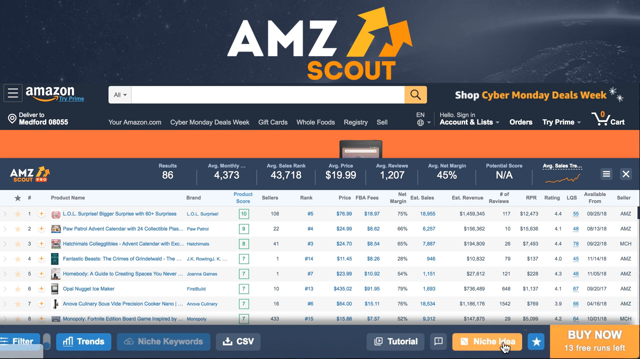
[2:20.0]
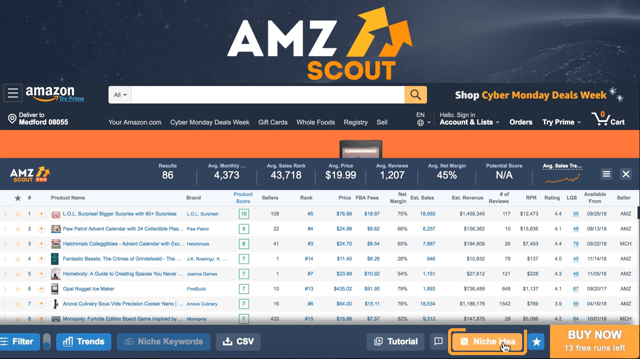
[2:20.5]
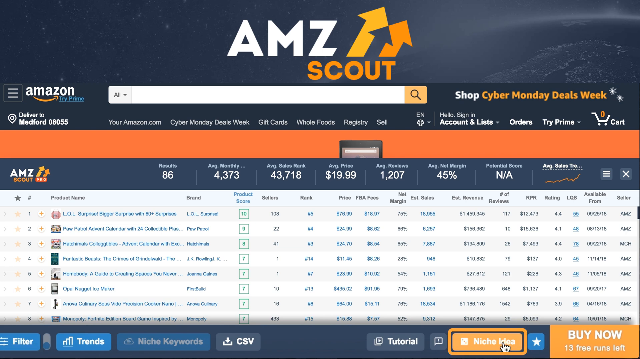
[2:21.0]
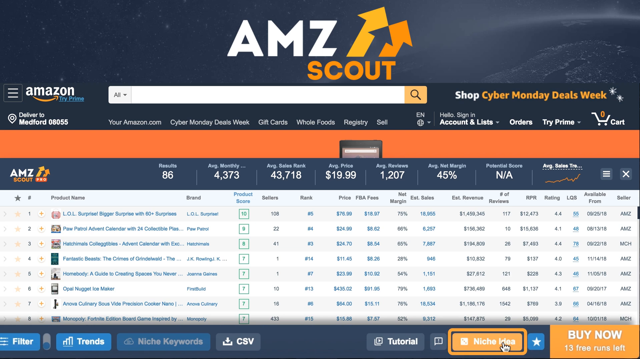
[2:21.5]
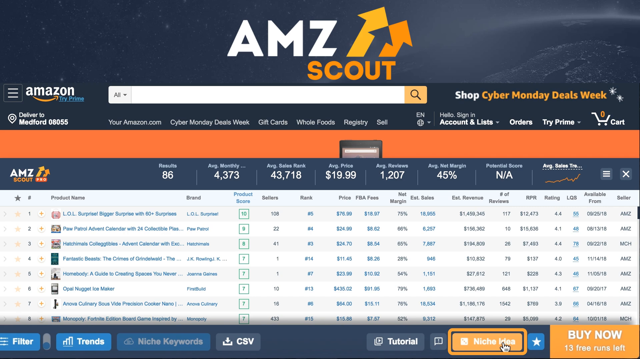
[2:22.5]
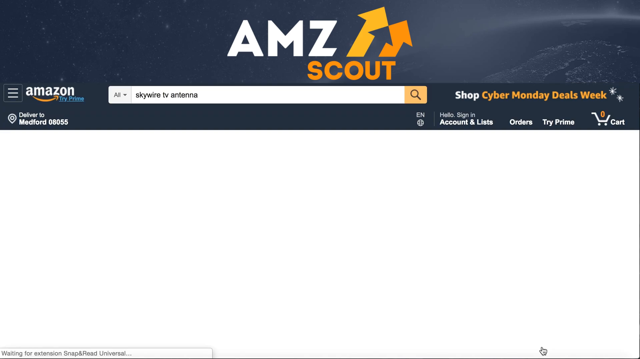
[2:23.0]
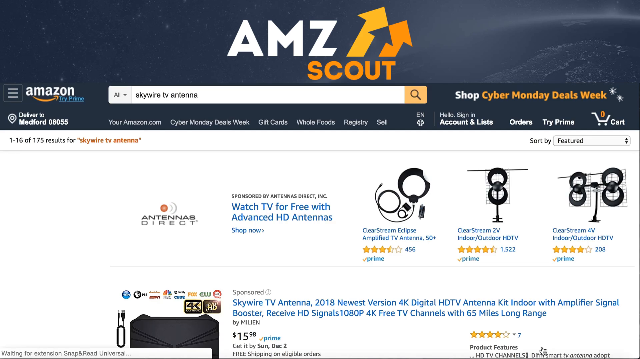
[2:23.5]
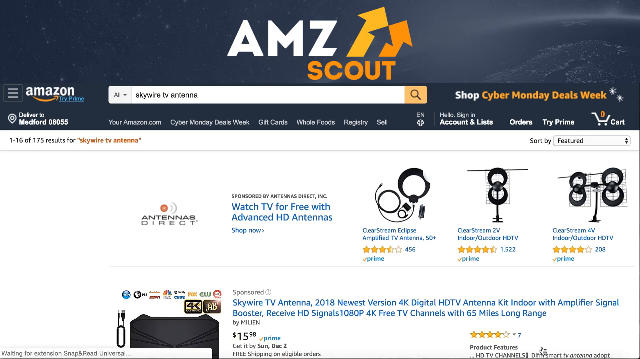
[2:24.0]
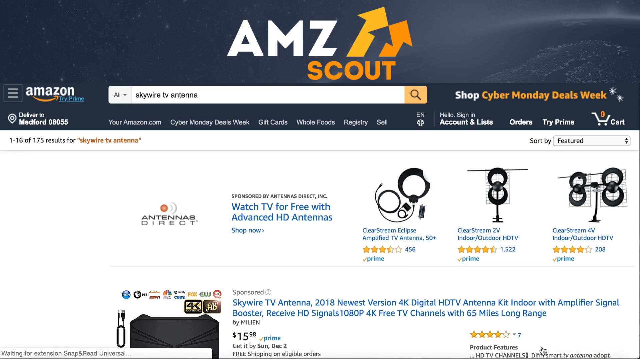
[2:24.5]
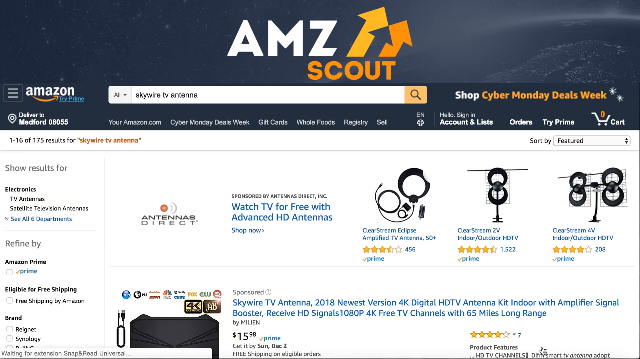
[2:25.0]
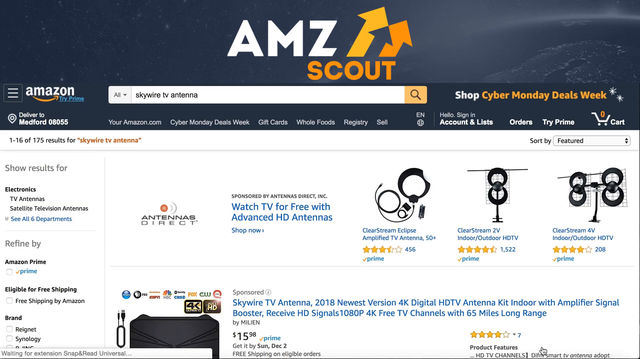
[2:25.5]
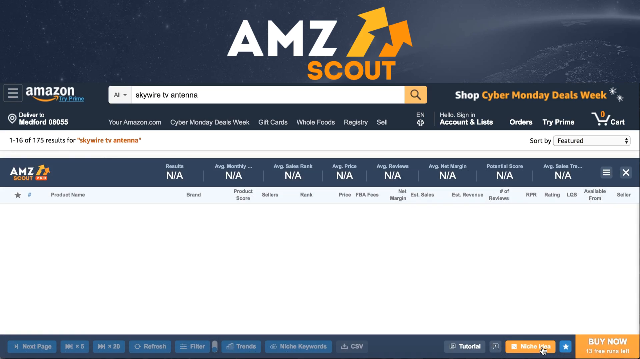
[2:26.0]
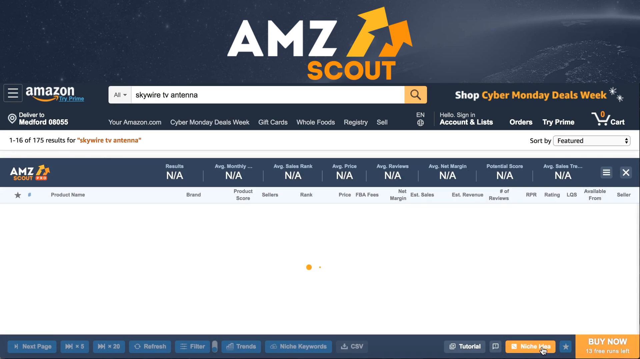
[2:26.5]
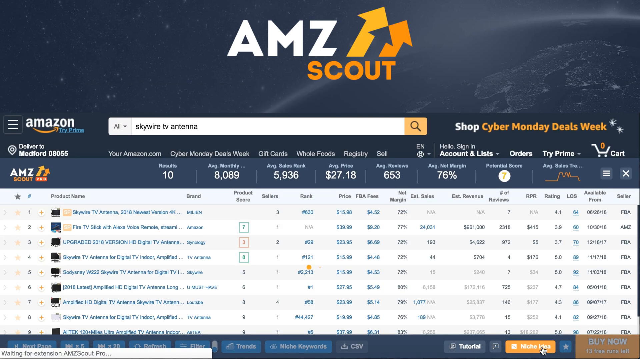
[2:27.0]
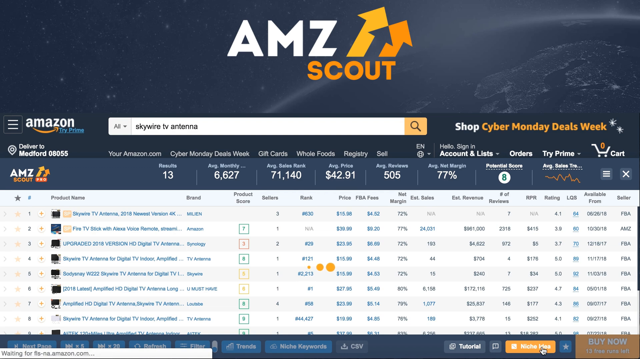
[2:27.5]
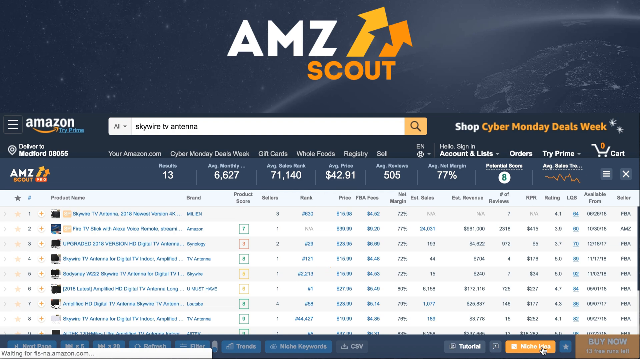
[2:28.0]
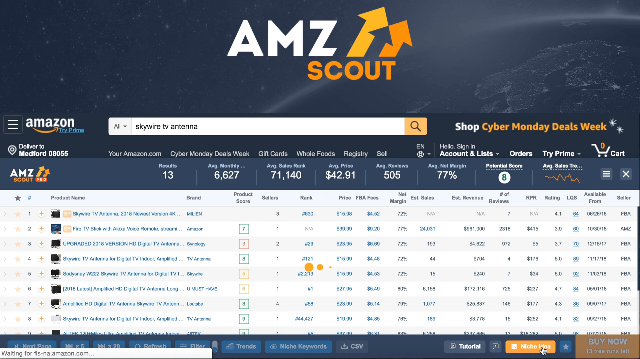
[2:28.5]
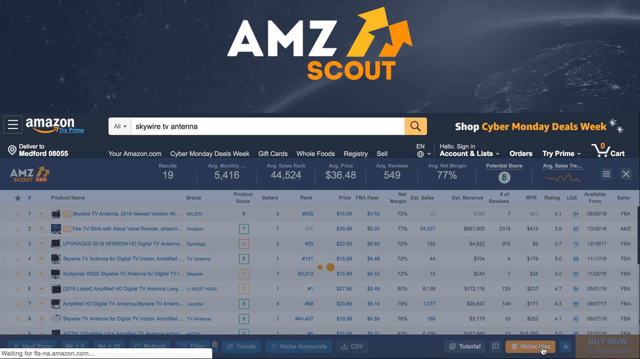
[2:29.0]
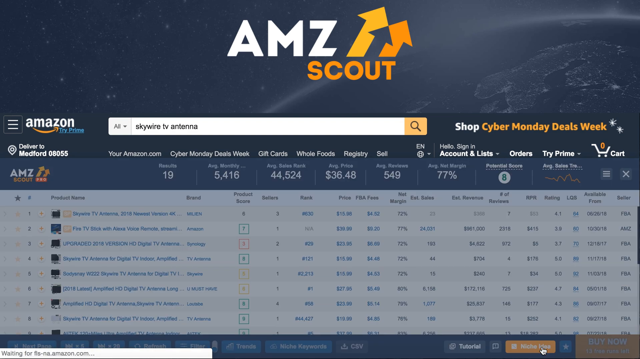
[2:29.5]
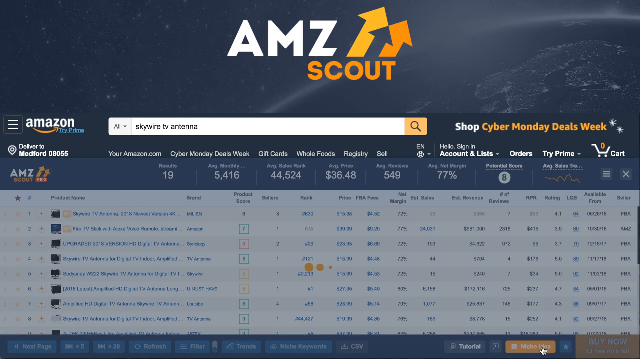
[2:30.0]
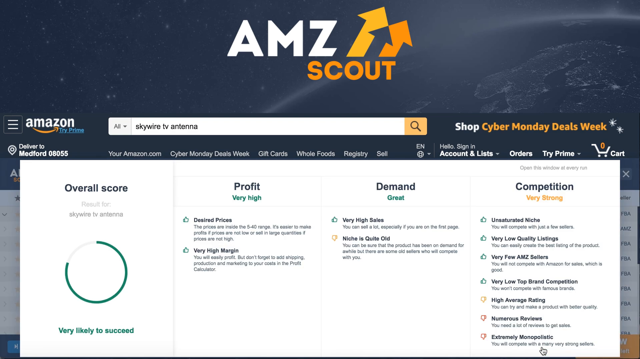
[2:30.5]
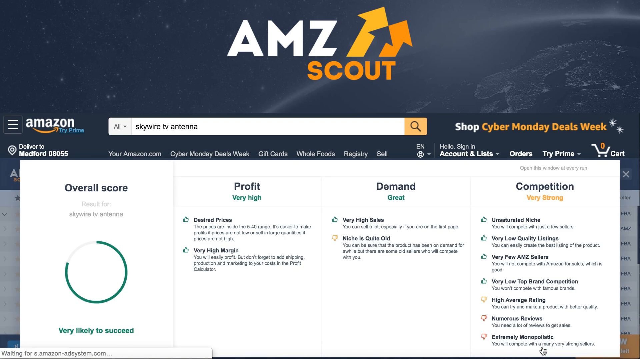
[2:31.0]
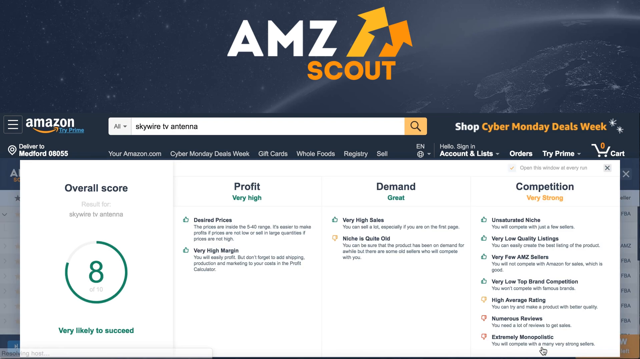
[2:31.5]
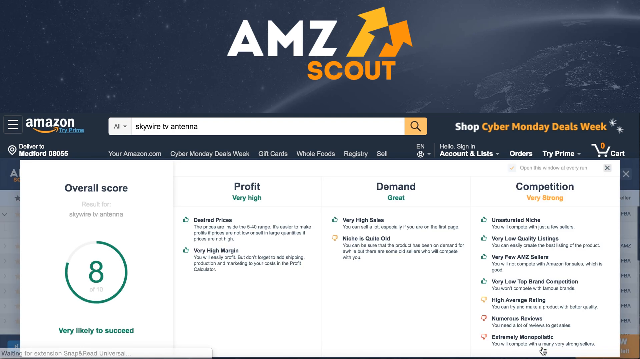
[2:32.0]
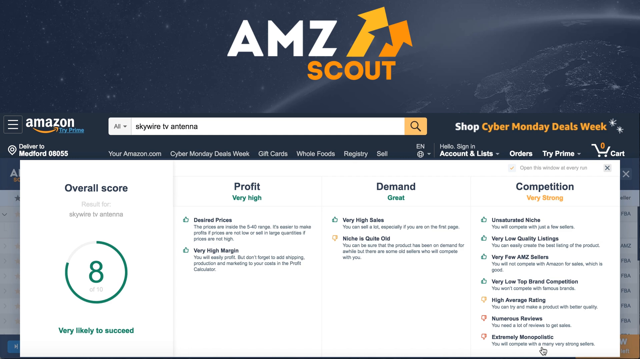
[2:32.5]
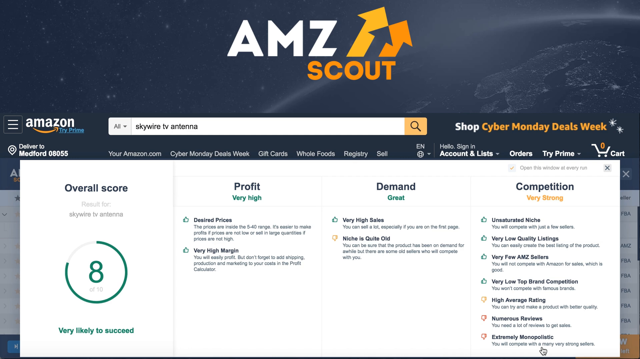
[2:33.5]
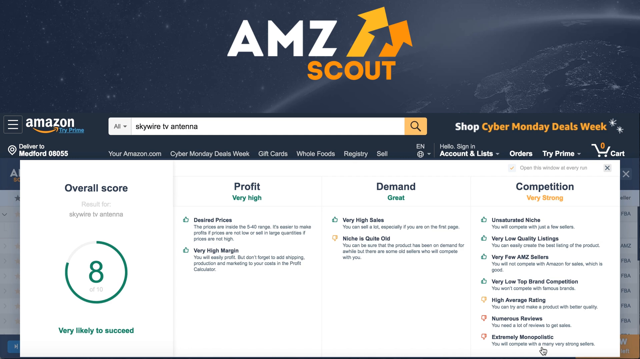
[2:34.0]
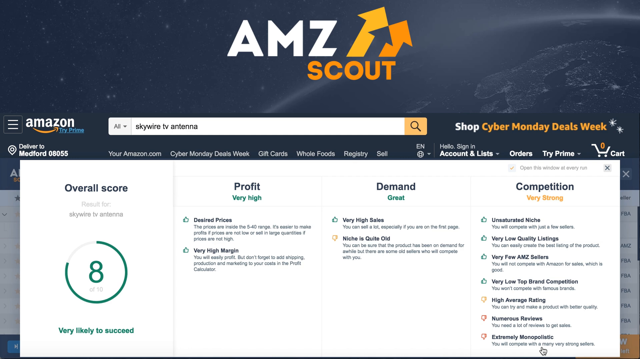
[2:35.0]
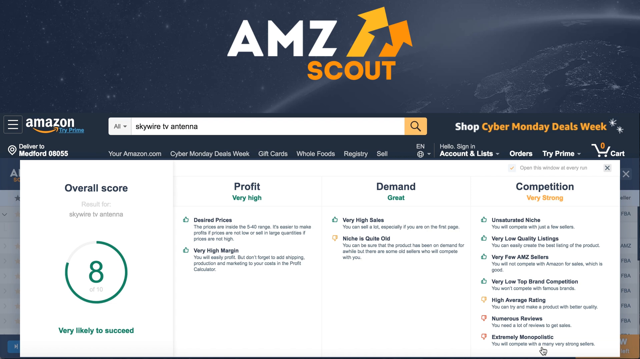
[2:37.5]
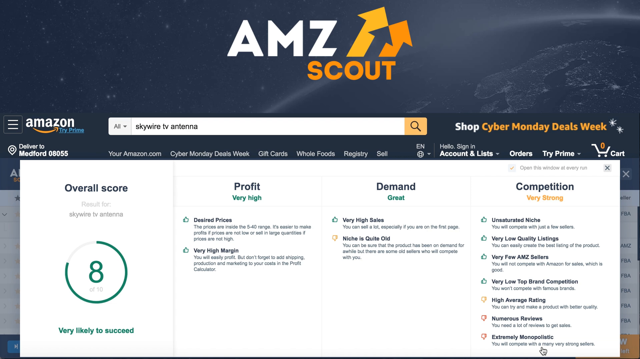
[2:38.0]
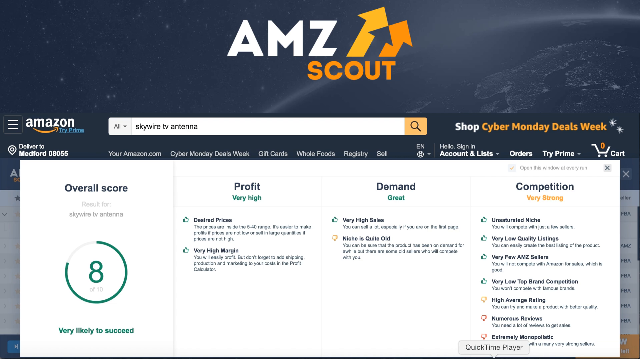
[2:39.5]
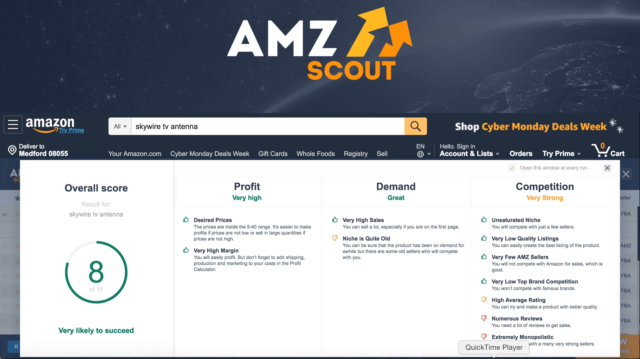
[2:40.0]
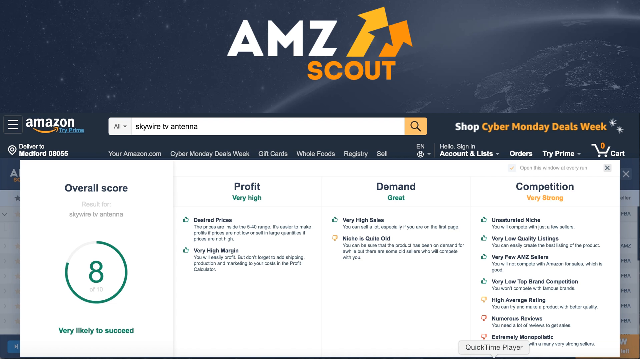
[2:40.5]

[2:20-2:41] On the AMZ Scout page with the products list, a button called niche idea appears. When it is selected, Skywire TV antenna appears in the search box on the Amazon page, along with a message that says "antennas direct, watch TV for free with advanced HD antennas". Various antennas appear. The view returns to the Skywire TV antenna page, which now has an overall score: profit is very high, demand is great and competition is very strong.